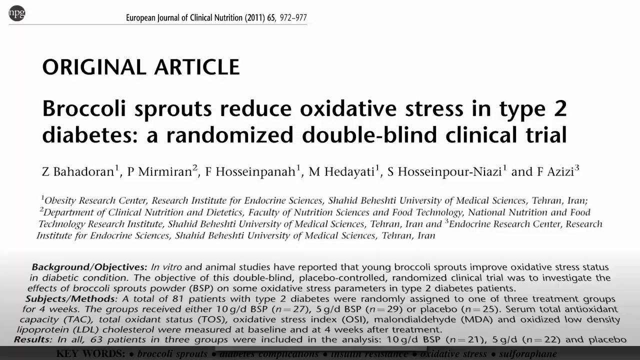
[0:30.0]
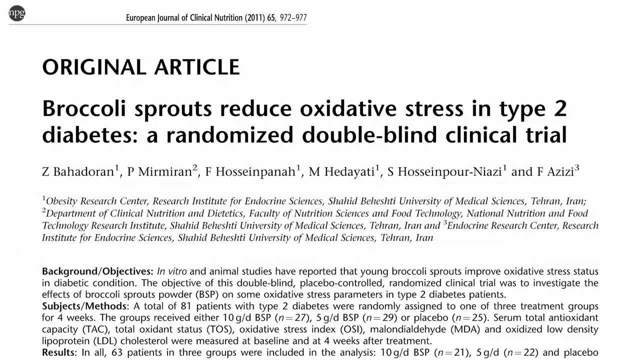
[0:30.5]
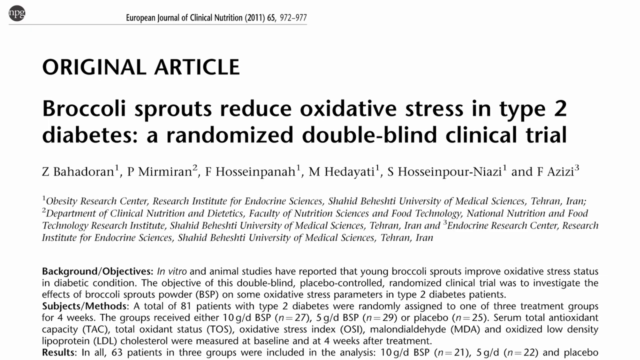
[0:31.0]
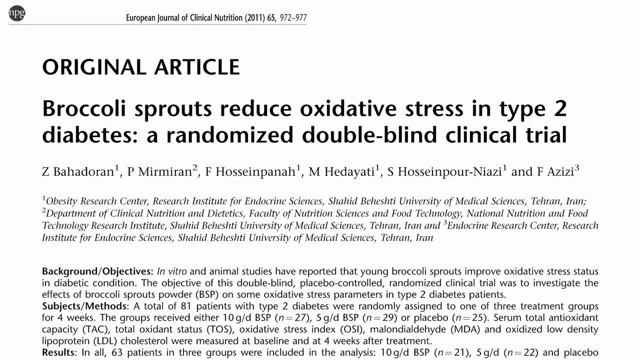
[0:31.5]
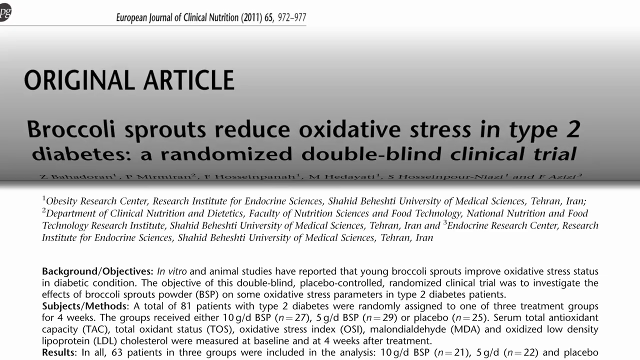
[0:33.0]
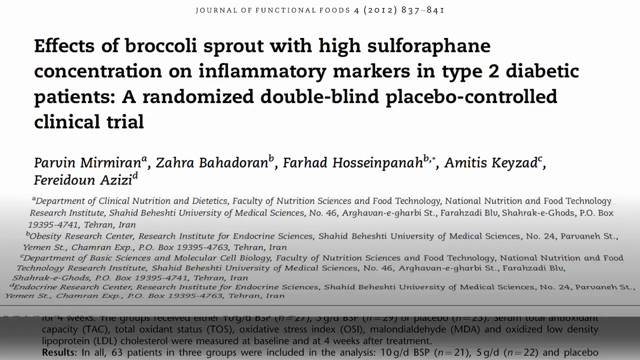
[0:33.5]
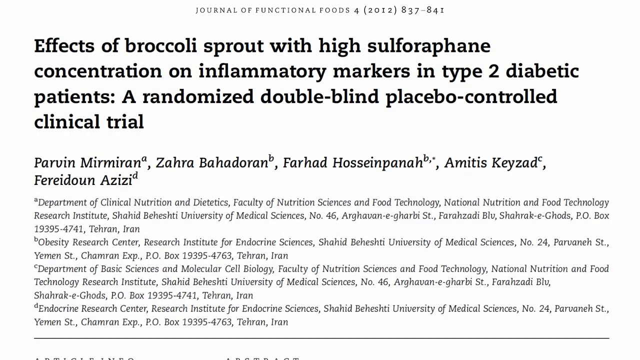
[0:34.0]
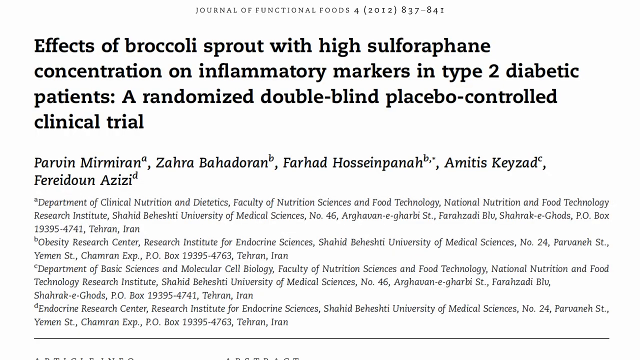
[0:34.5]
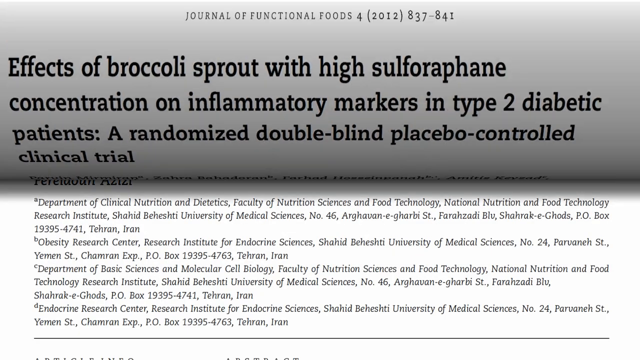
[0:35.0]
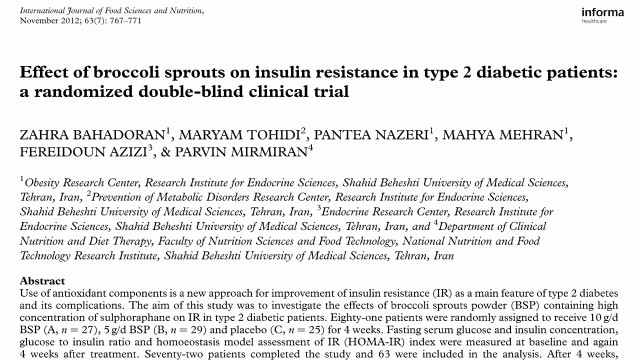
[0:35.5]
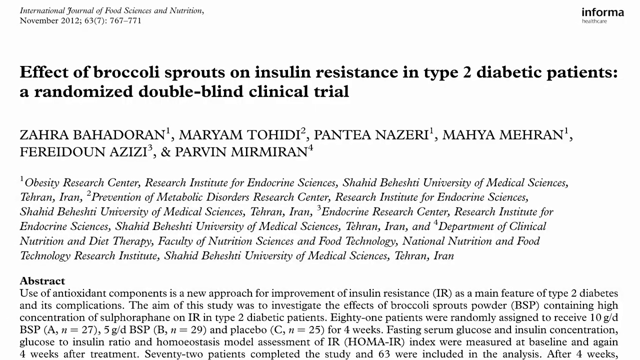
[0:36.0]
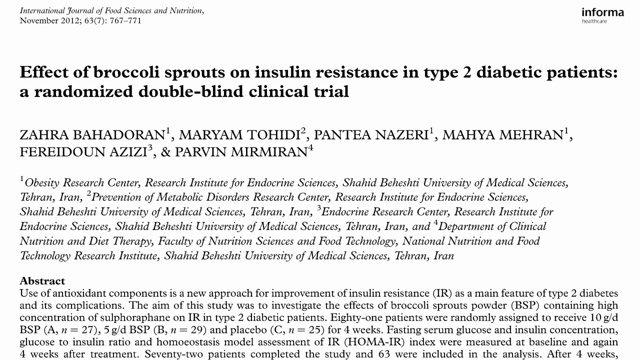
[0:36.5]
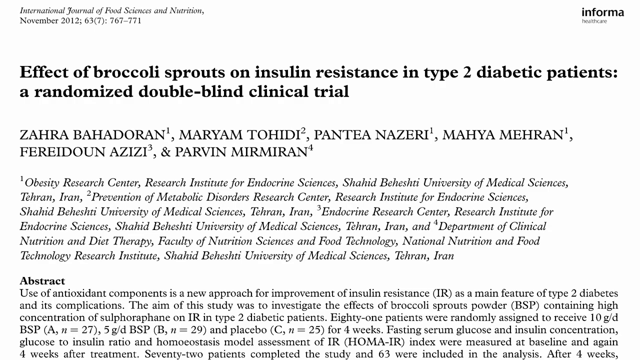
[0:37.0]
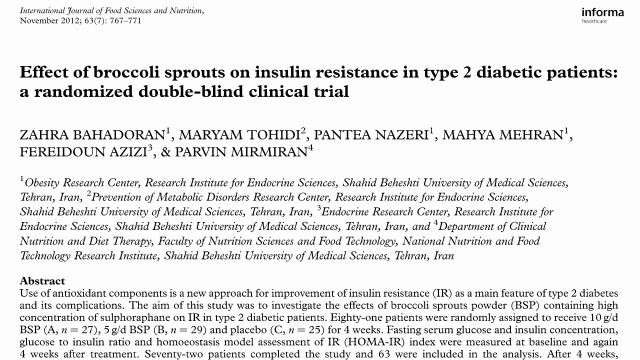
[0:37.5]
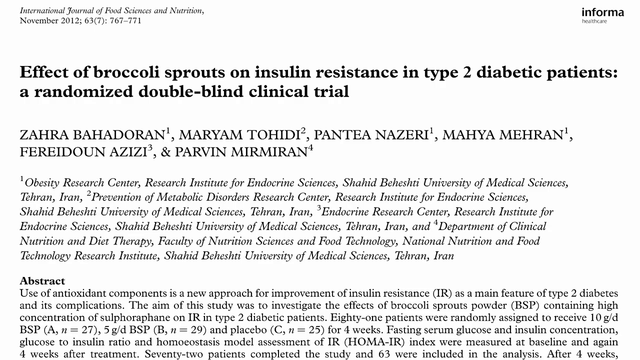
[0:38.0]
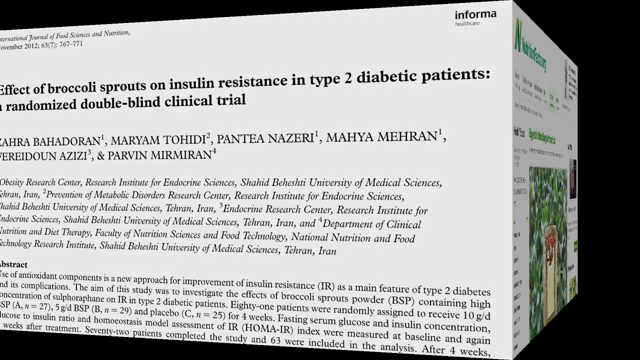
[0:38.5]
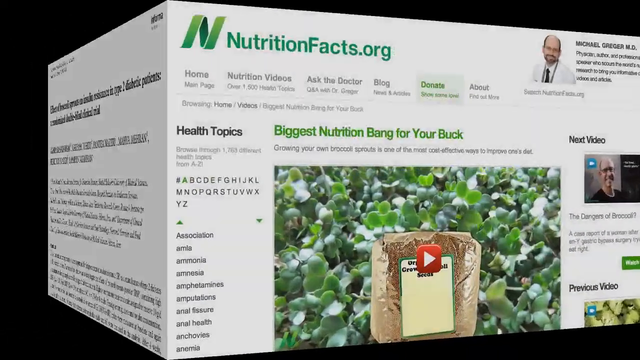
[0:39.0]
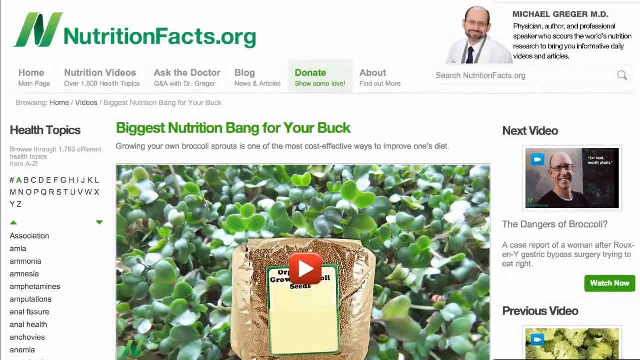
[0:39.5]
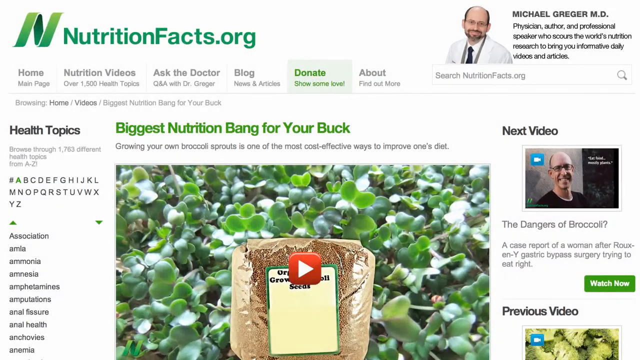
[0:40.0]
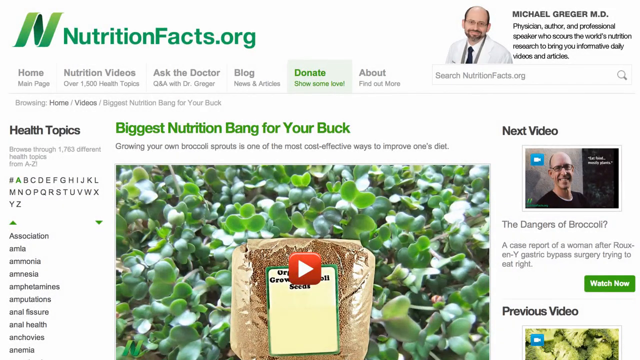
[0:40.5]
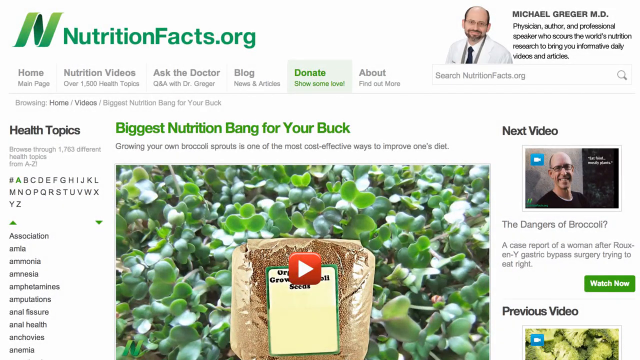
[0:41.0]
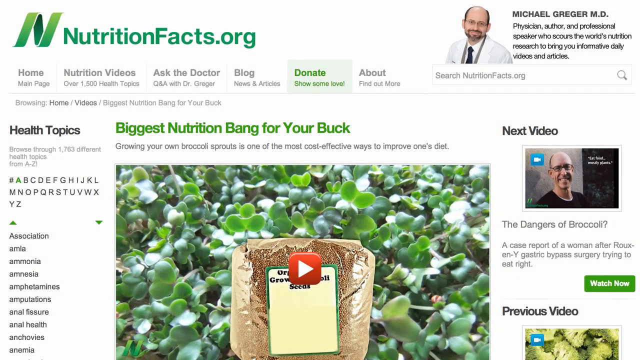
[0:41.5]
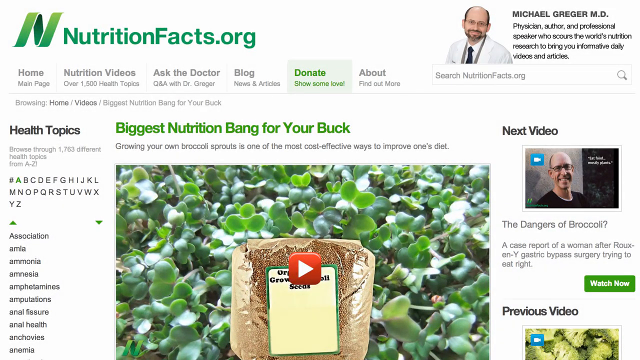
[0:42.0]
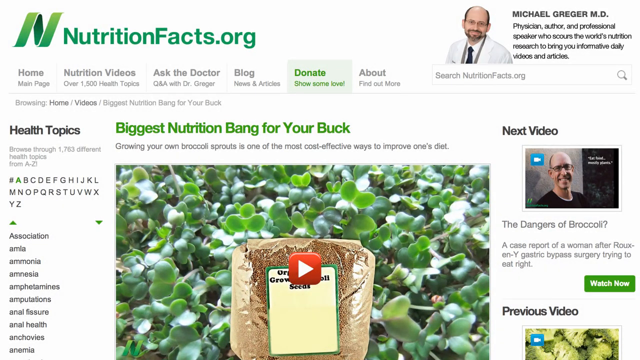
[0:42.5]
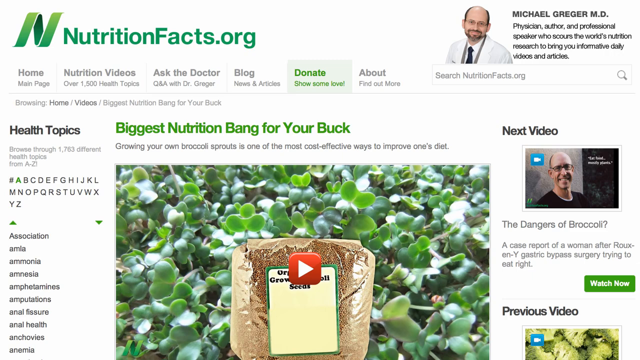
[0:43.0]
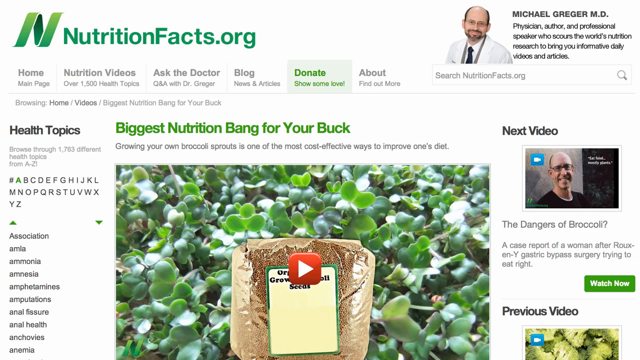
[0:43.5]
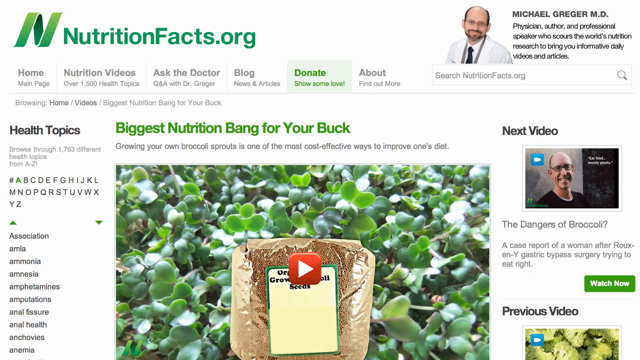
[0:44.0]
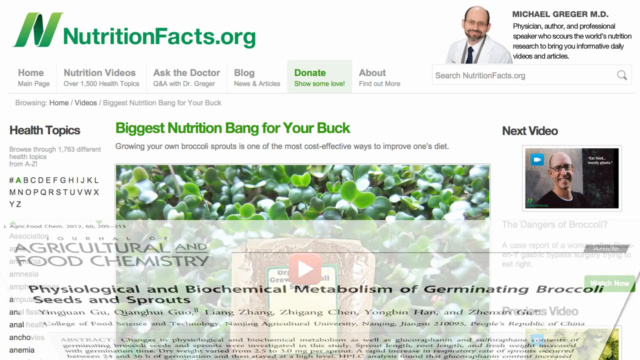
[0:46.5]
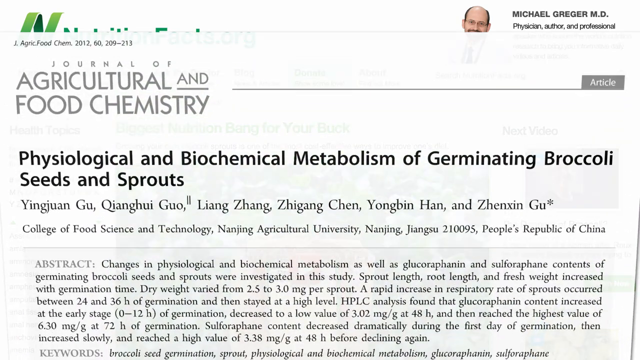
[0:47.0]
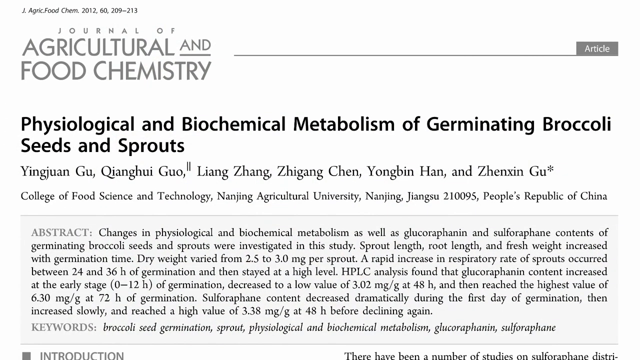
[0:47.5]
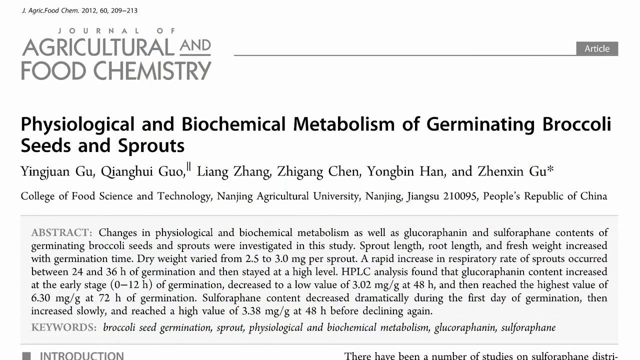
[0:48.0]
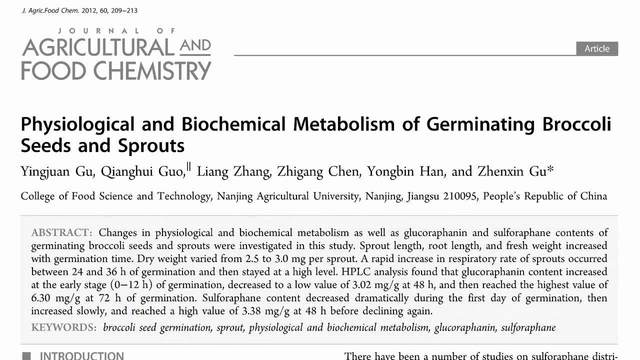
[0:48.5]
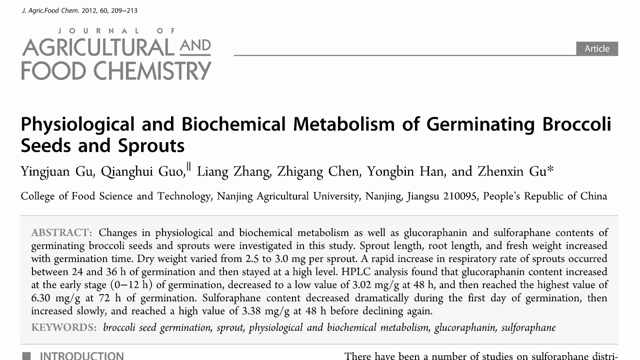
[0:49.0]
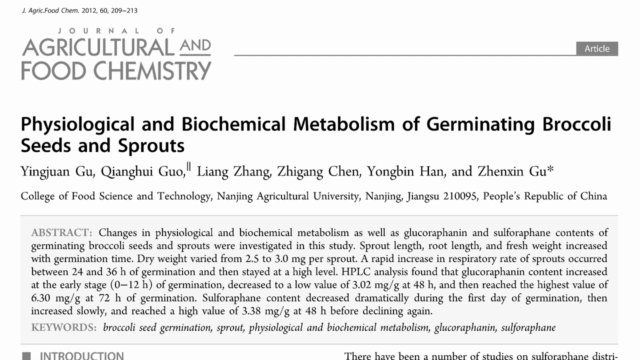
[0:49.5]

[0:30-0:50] A screenshot of an article appears, with the publisher's name in the upper left-hand corner: "European Journal of Clinical Nutrition", followed by "2011-65-972-977". Underneath, the article reads: "Original article, broccoli sprouts reduce oxidative stress in type 2 diabetes, a randomized double-blind clinical trial. Background/objectives, in vitro and animal studies have reported that young broccoli sprouts improve oxidative stress status in diabetic condition. The objective of this double-blind placebo-controlled randomized clinical trial was to investigate the effects of broccoli sprouts powder, BSP, on some oxidative stress parameters in type 2 diabetes patients, subjects/methods. A total of 81 patients with type 2 diabetes were randomly assigned to one of three treatment groups for four weeks." The text continues with details of the treatment groups, the measured parameters and the results. Several more pages of the article follow.